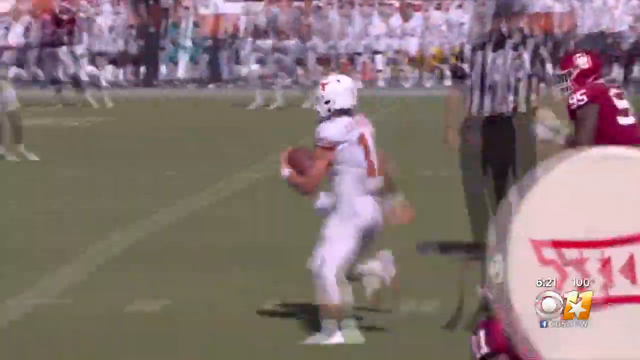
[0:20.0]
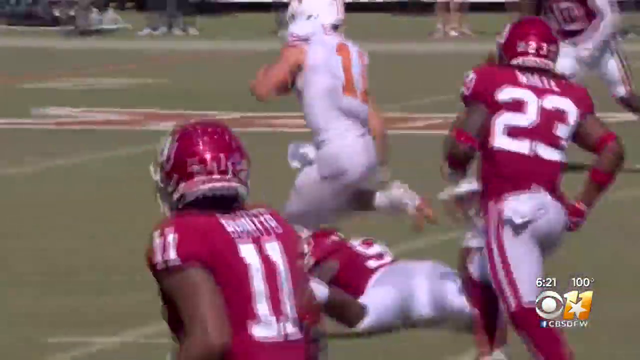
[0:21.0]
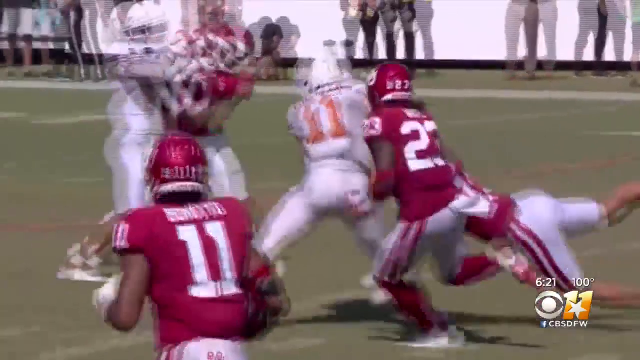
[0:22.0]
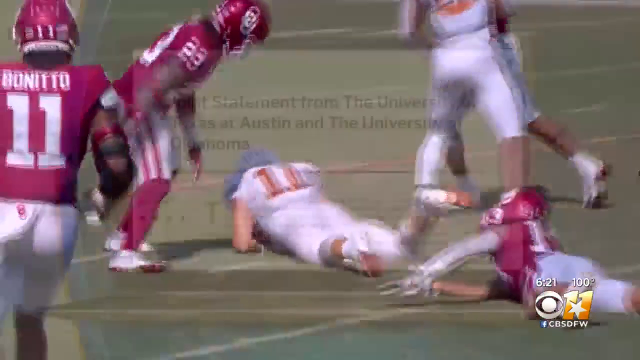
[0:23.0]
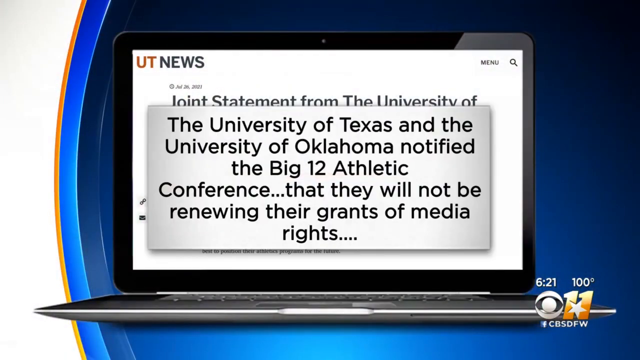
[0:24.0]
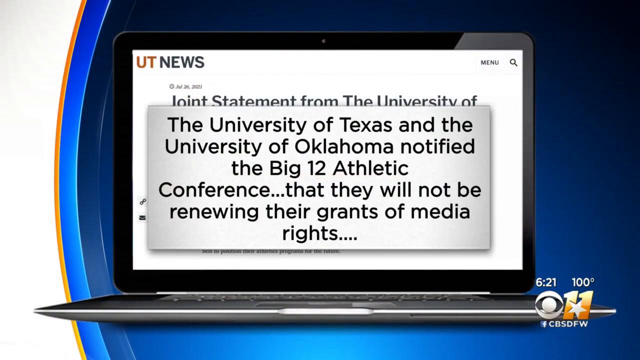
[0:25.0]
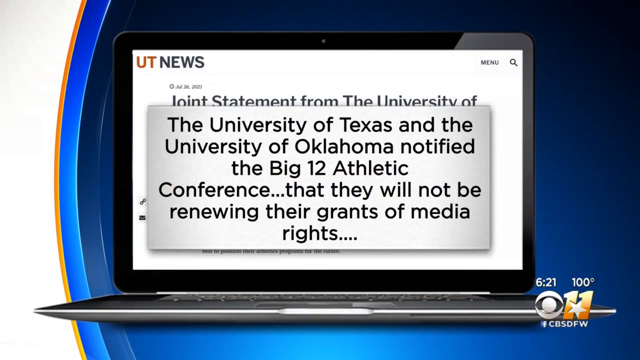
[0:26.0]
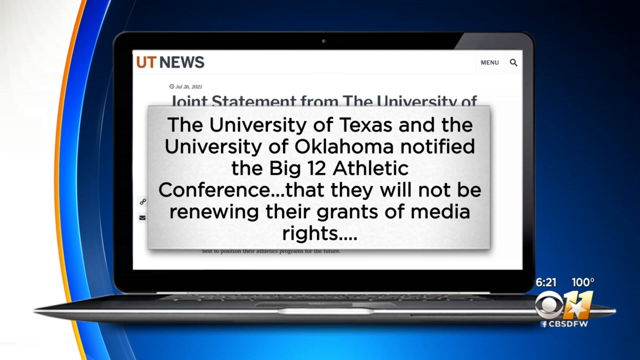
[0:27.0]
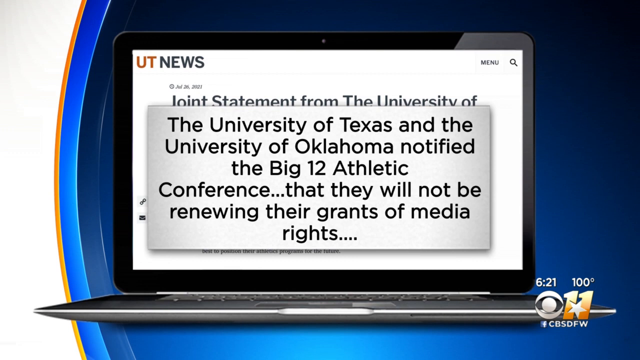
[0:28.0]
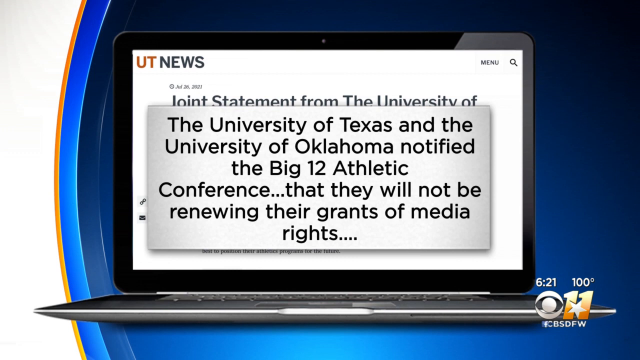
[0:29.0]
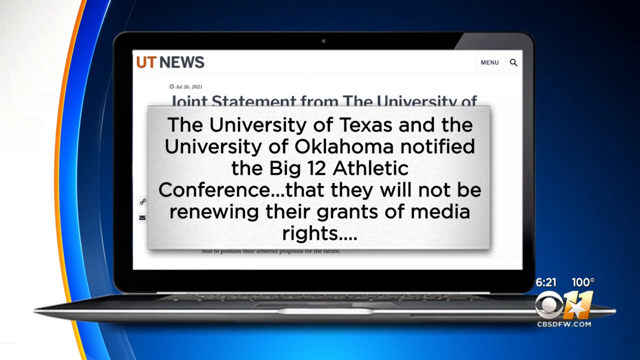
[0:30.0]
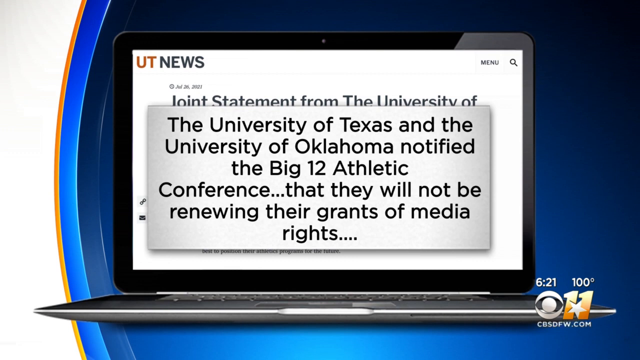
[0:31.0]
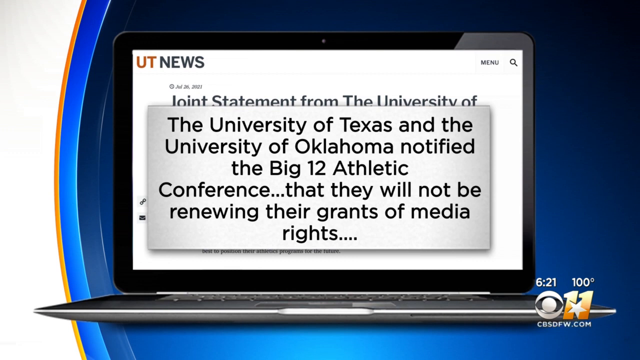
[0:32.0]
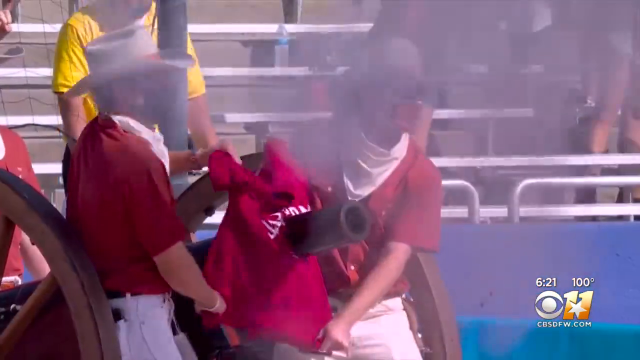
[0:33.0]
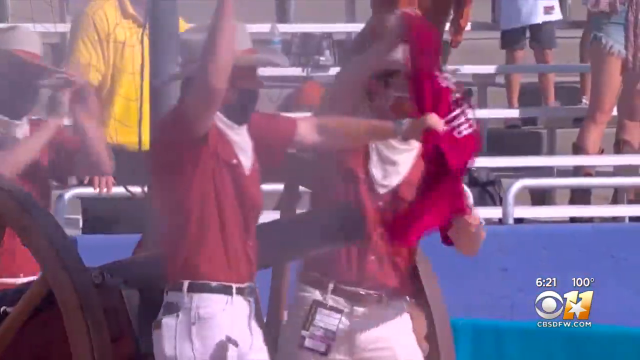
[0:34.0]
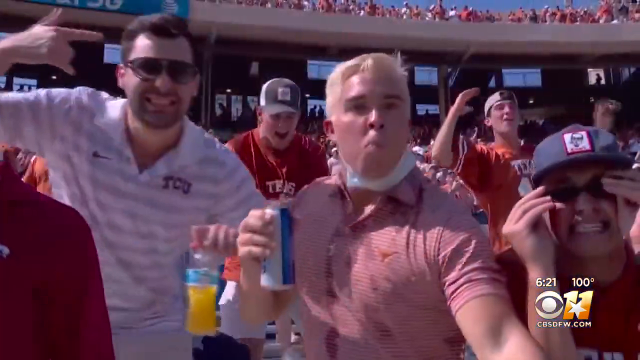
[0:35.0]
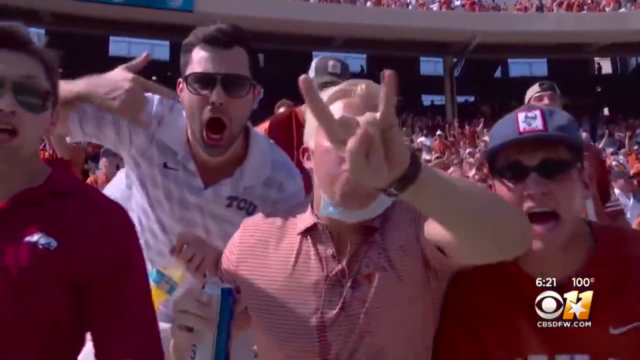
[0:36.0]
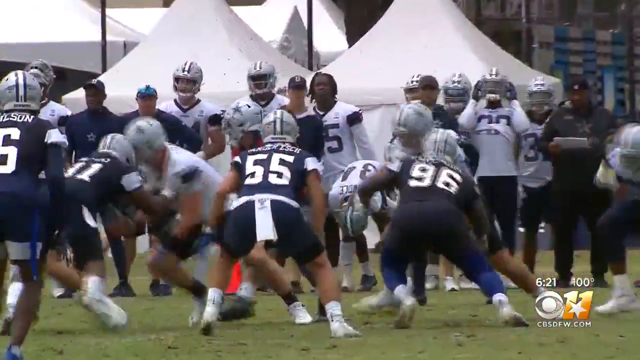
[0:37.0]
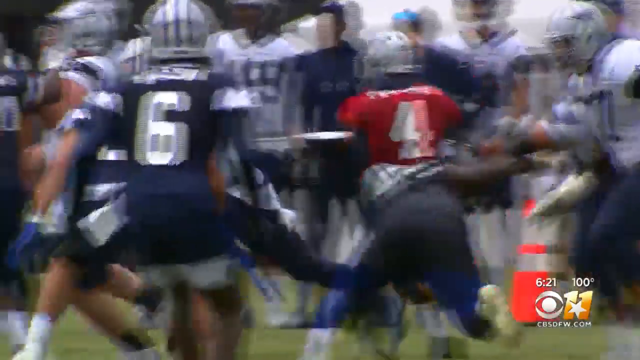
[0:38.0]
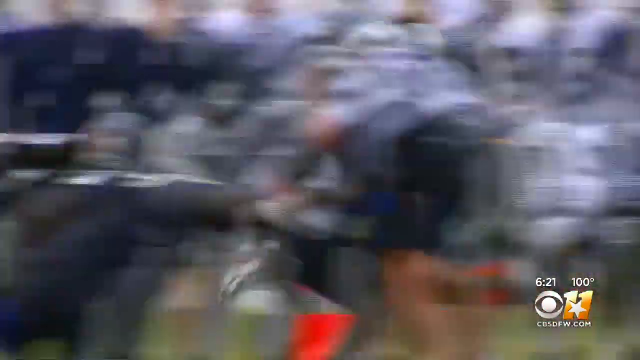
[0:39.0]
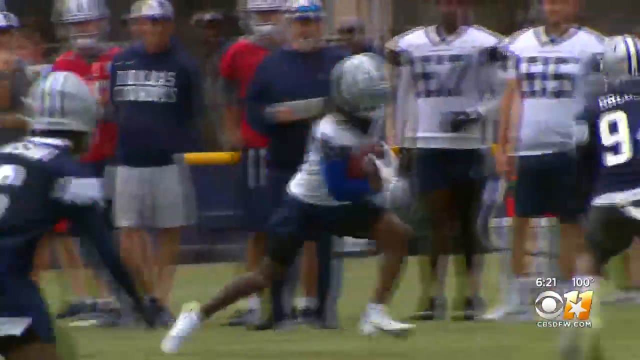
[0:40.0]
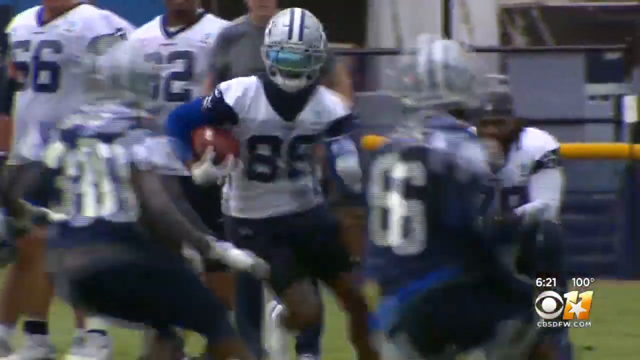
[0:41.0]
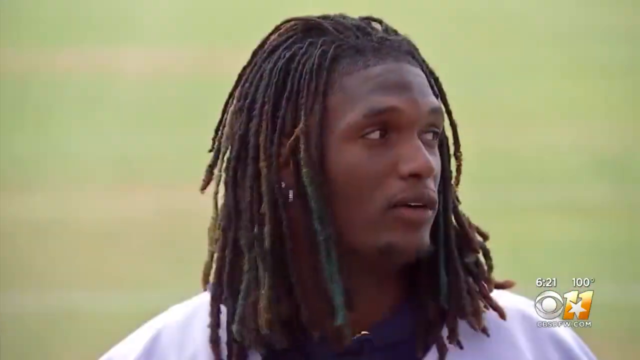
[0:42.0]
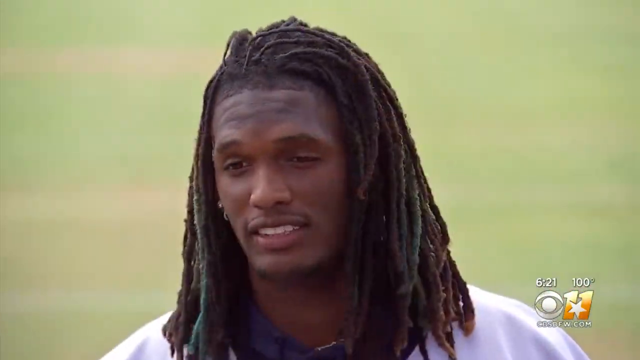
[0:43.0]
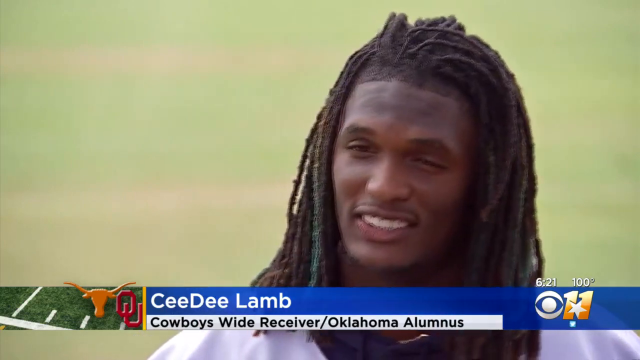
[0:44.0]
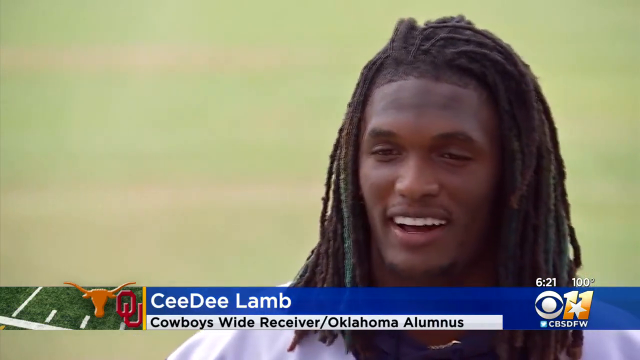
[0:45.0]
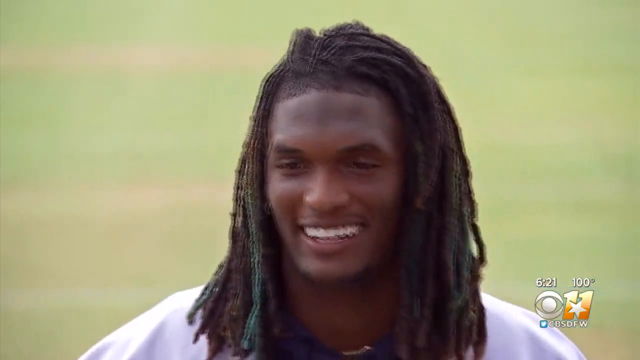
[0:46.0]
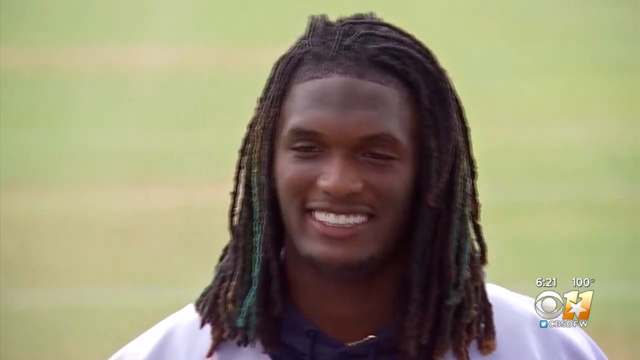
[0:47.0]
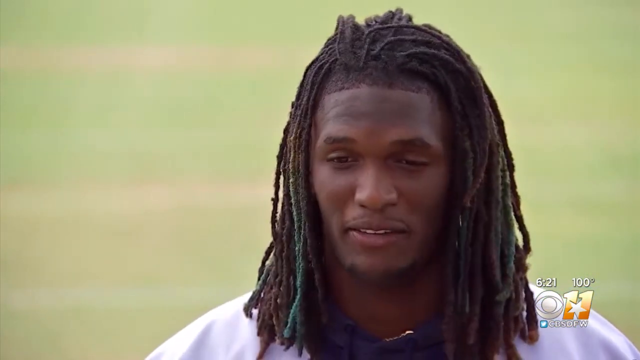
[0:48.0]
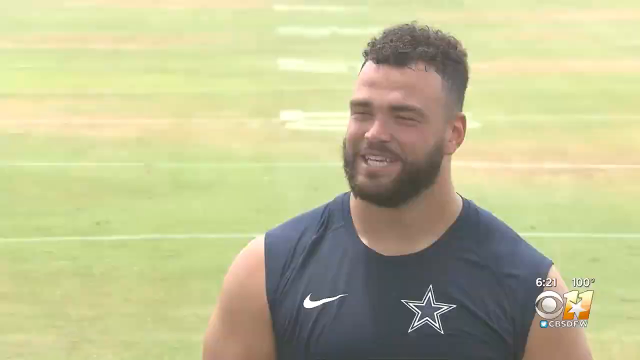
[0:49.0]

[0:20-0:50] The man in white carries the ball toward his goal while a man in red follows him, and a referee looks on. The man in red, followed by his teammates, gets closer to the man in white and goes to tackle him, but the man in white runs faster and gets closer to his goal. Another man in red tries to tackle him, and the man in white is brought to the ground. The footage moves back to a CBS background with an animation of a laptop showing a written statement: "the University of Texas and the University of Oklahoma notified the Big 12 Athletic Conference that they will not be renewing their grants of media rights." The laptop screen in the animation reads "UT News". What look like fans in red shirts and cowboy hats cheer next to a cannon that has been fired, followed by other fans looking at the camera. More shots of American football being played follow, along with an interview with someone called CeeDee Lamb, who seems calm.